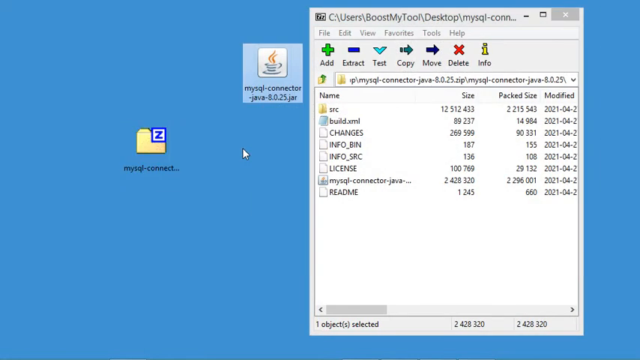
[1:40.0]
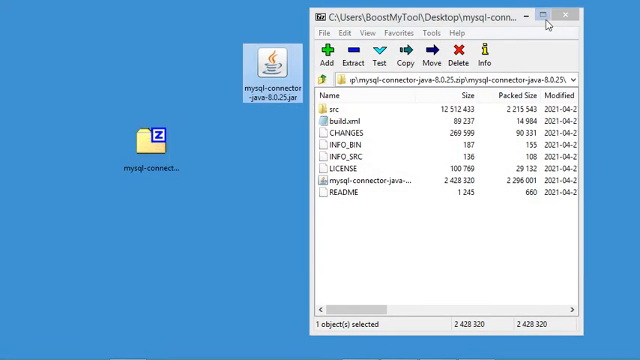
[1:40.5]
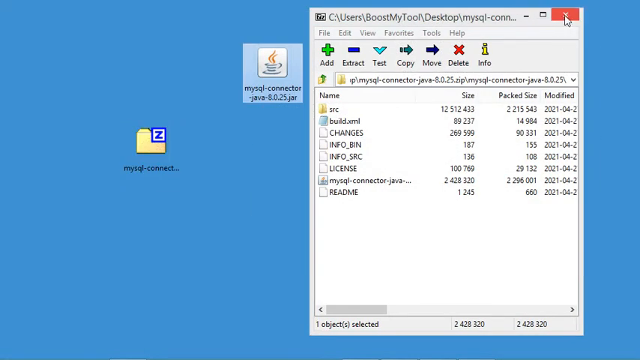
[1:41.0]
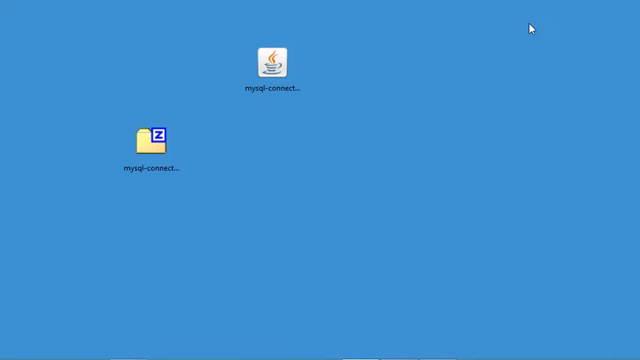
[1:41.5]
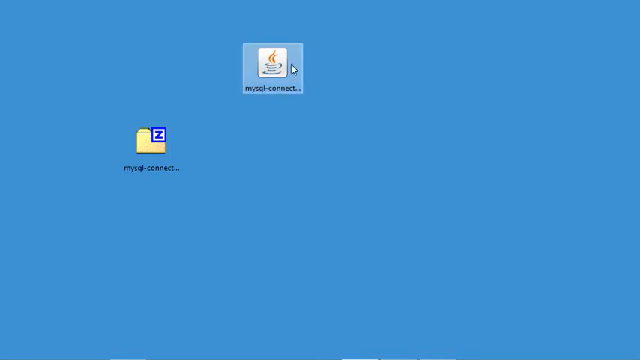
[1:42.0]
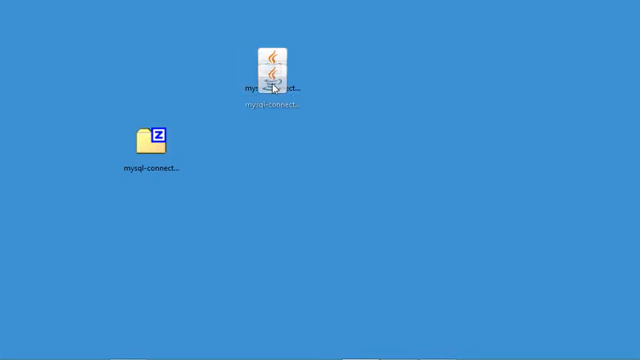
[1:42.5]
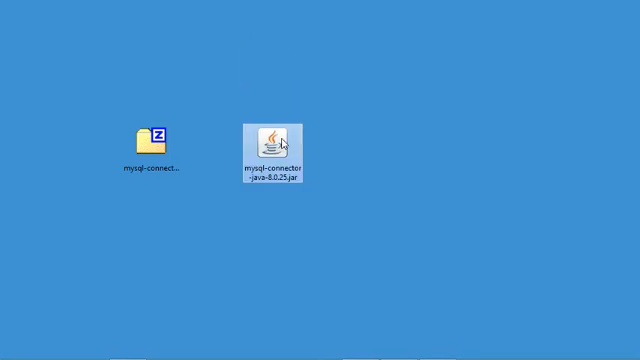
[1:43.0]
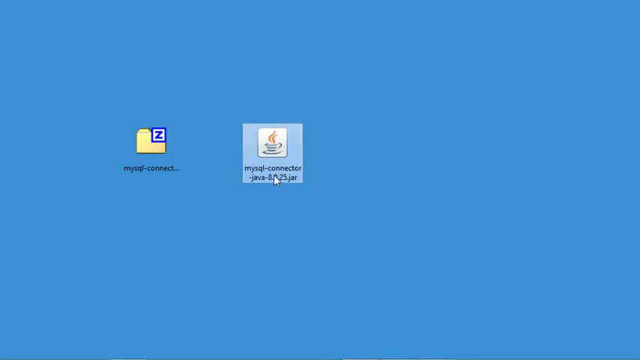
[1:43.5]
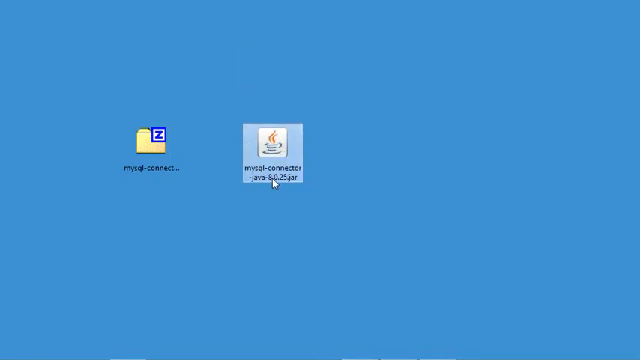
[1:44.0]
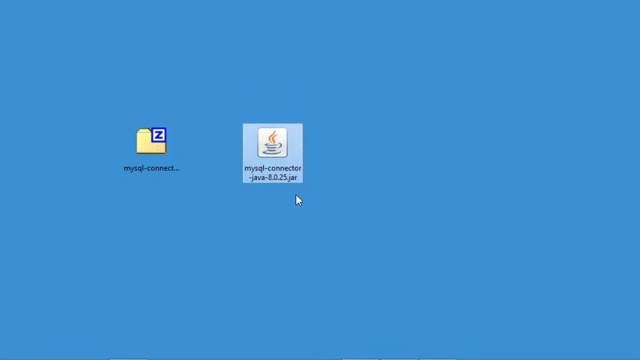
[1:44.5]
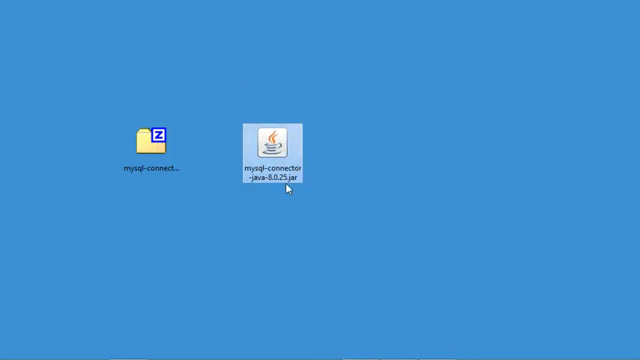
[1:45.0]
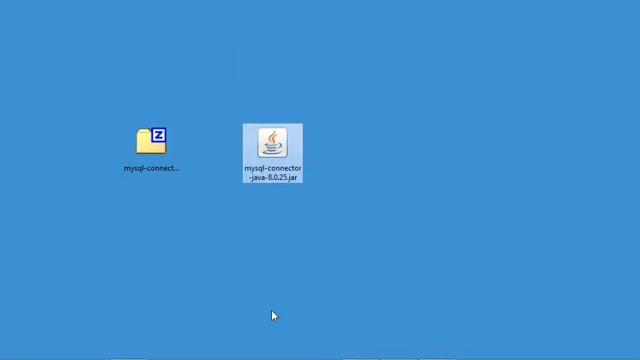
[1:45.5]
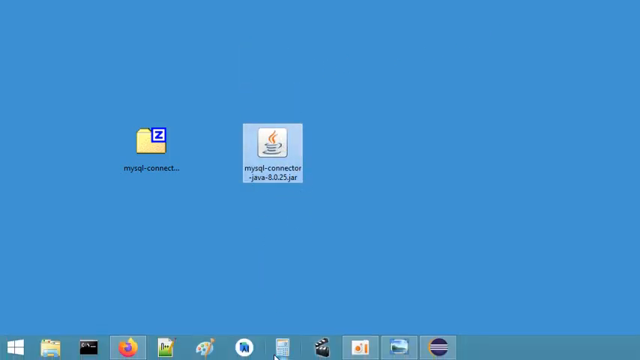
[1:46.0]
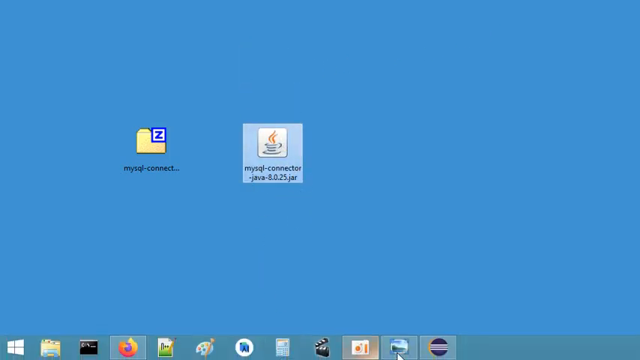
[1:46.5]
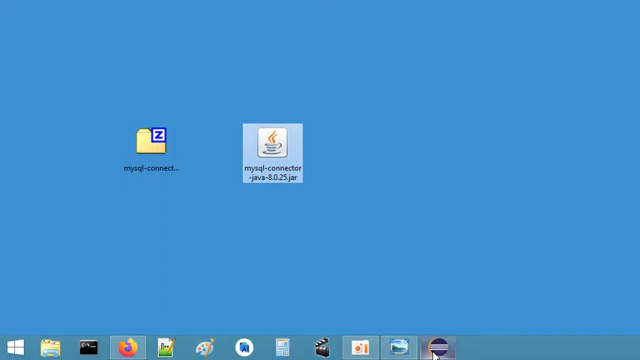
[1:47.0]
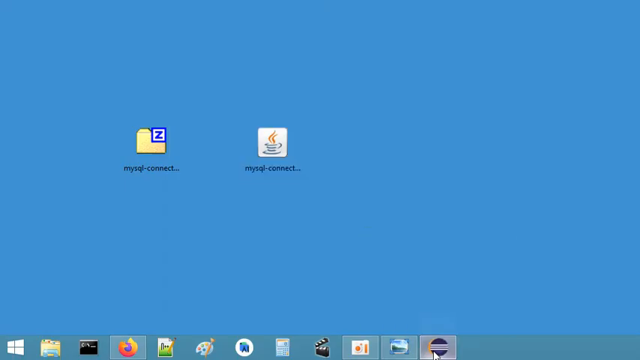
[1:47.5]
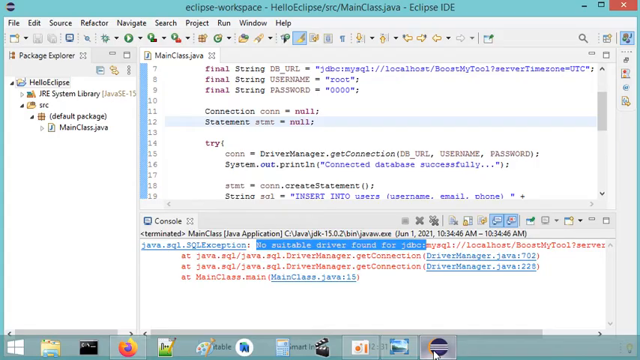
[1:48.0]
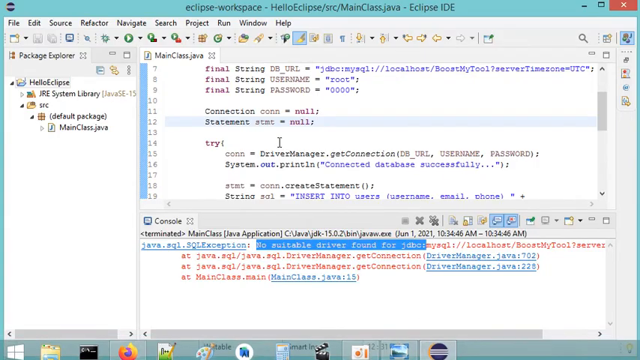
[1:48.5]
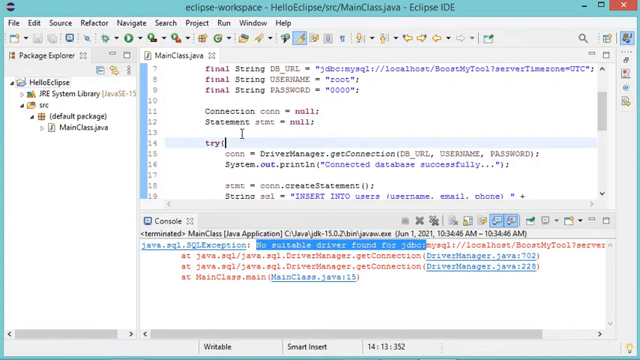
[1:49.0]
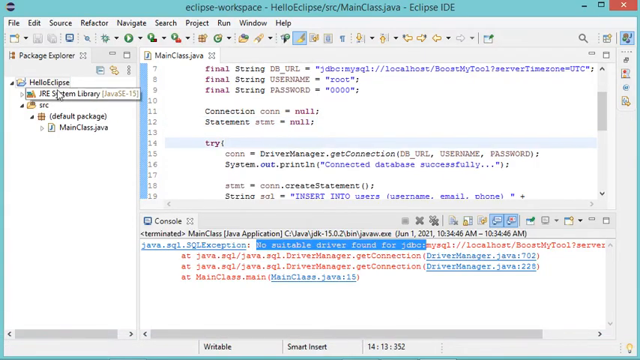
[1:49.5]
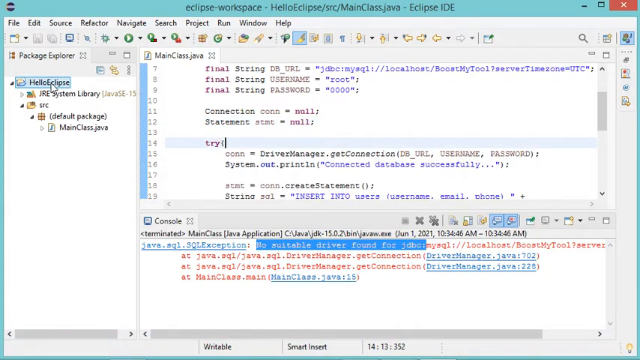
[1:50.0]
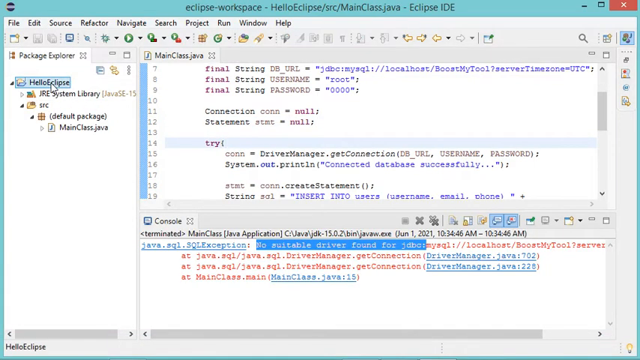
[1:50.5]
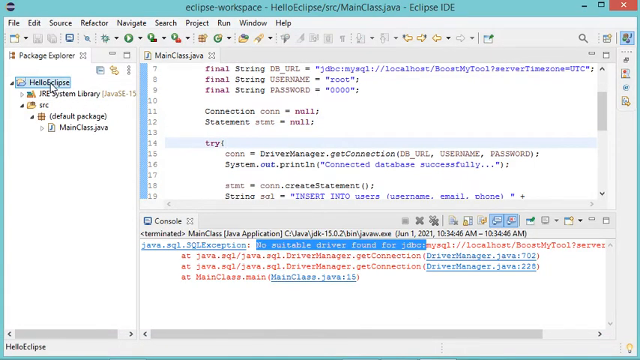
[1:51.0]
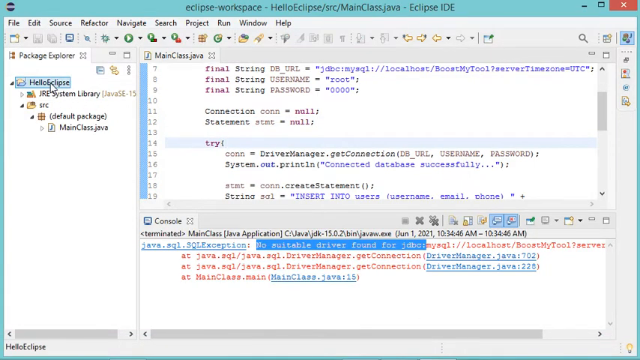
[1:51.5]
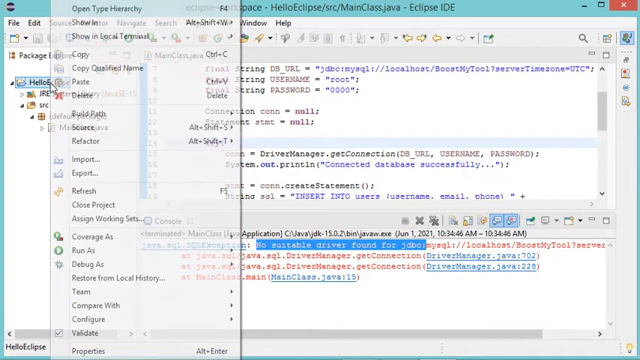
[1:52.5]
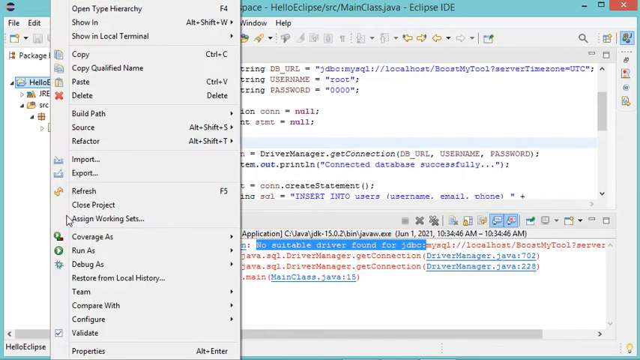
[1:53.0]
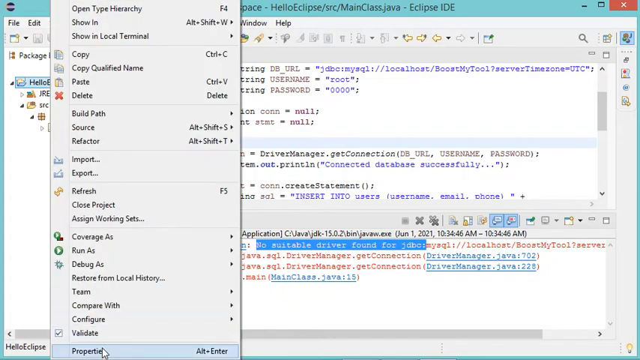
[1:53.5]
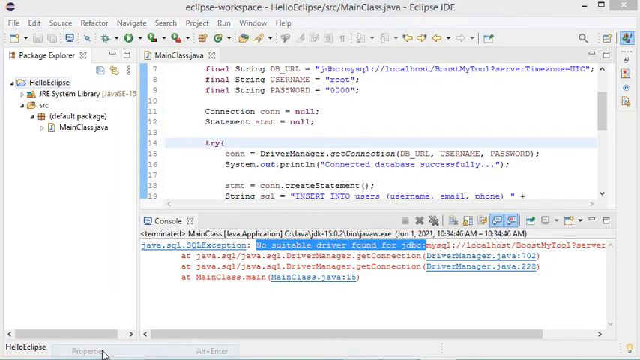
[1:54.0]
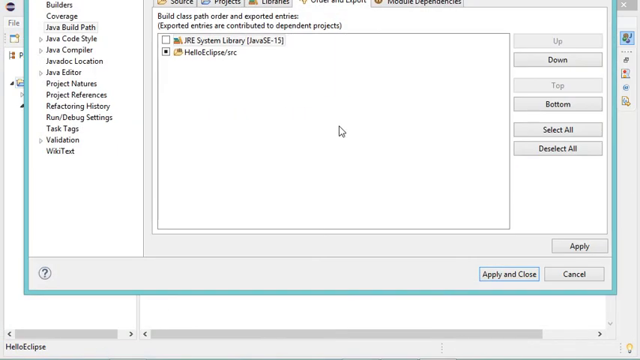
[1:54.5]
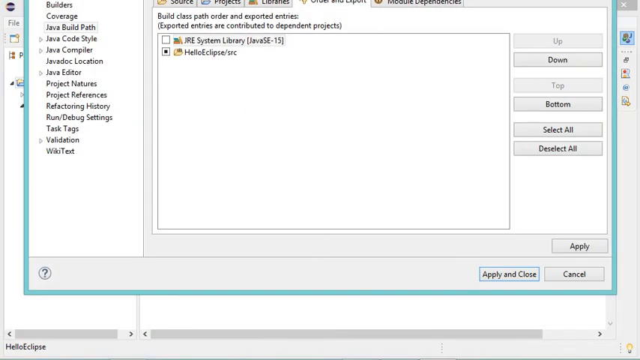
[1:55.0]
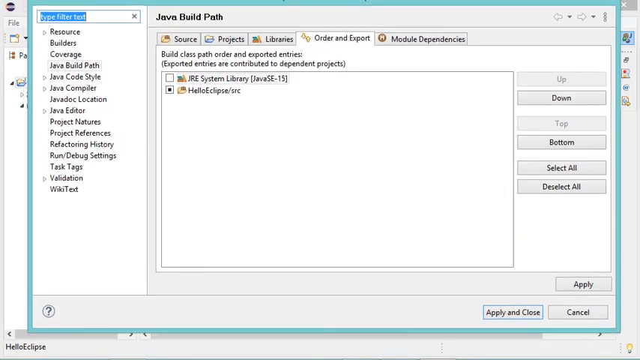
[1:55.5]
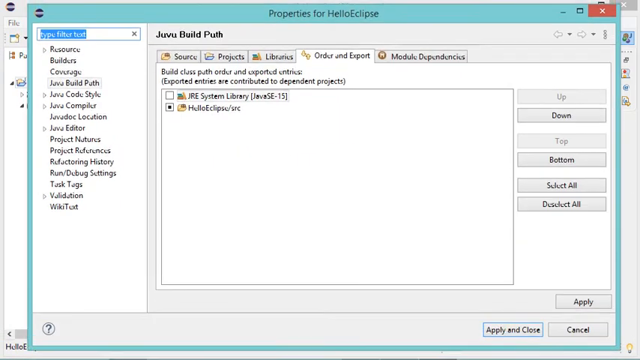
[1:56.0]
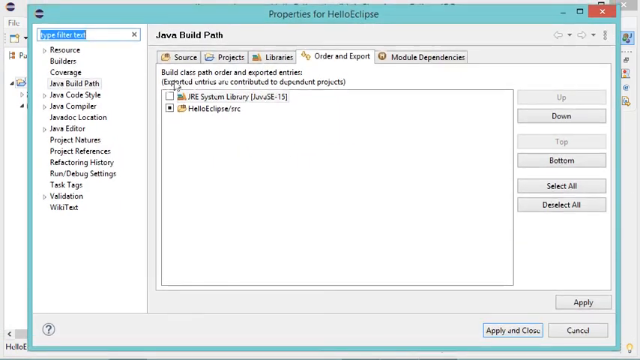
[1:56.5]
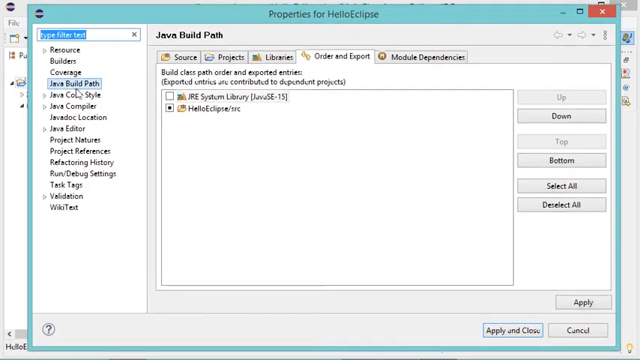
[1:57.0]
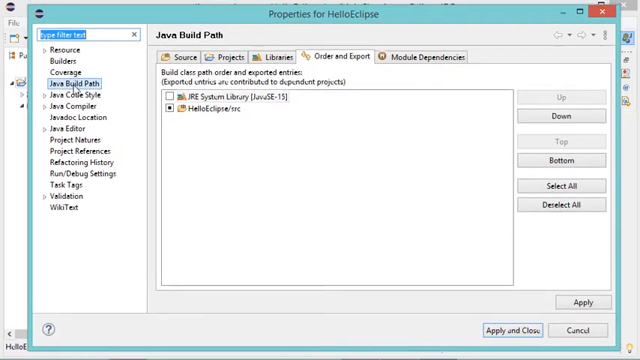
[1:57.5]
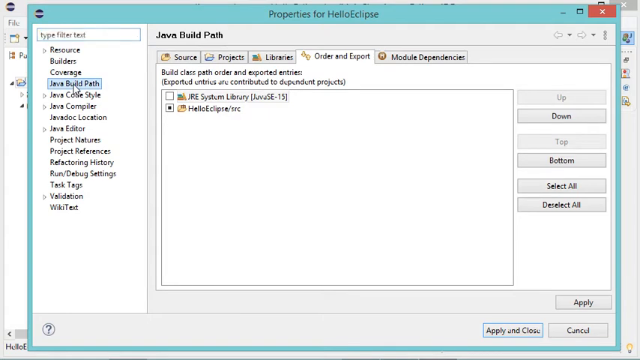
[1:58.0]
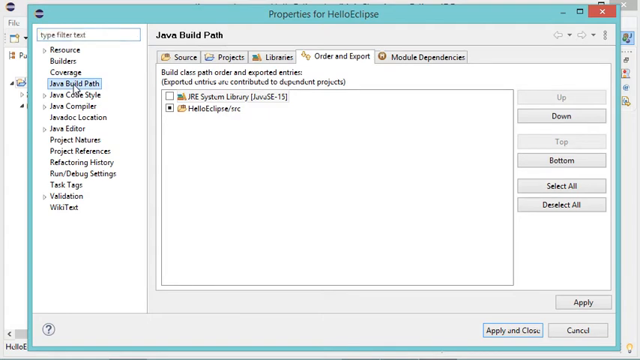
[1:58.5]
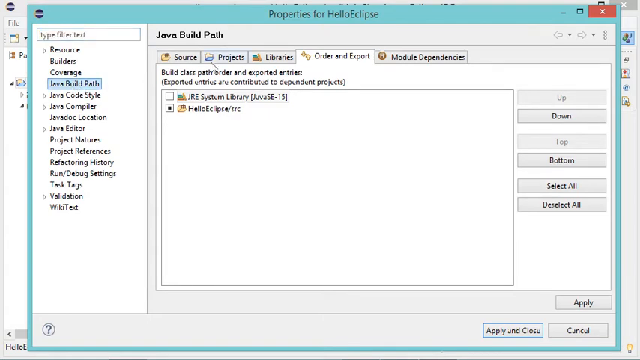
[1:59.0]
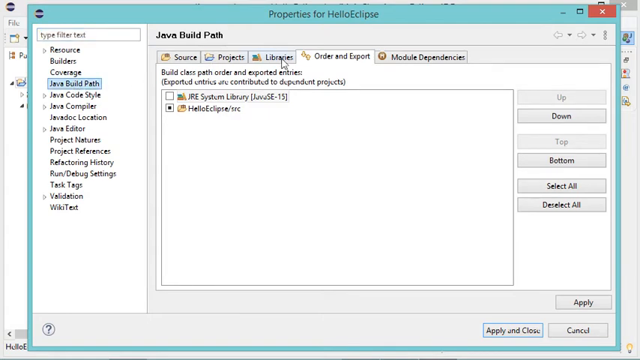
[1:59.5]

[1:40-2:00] A blue desktop screen shows a "MySQL Connect" folder and a MySQL Connector Java application. An application on the computer shows the files inside MySQL Connect, and the user exits out of it. They then go to the Java application and drag it on the screen. The mouse kind of circles around, and the user opens the Eclipse workspace back up. They click on the "try" area, then go up to the Hello Eclipse folder and go to properties. The properties window opens with options for builders, coverage, Java build path, Java code style, Java compiler, Javadoc location and other settings, along with "build class path order and exported entries". The user clicks on Java build path and goes to the library section.